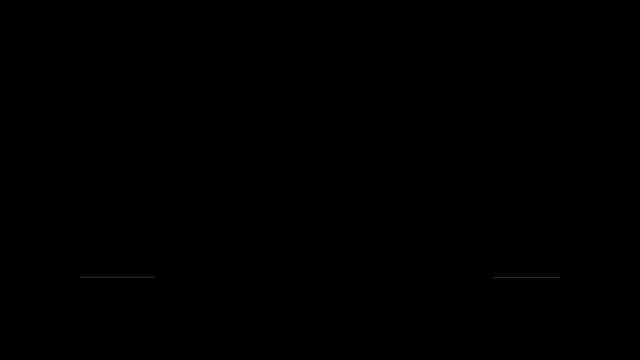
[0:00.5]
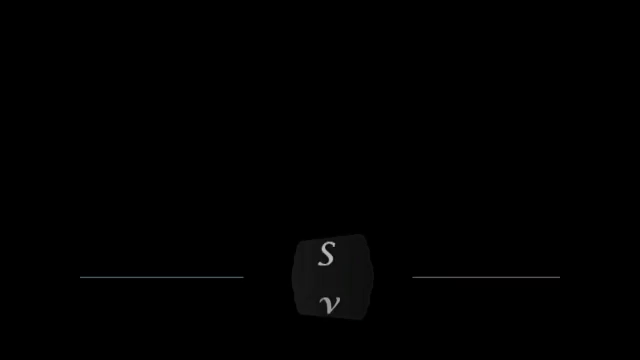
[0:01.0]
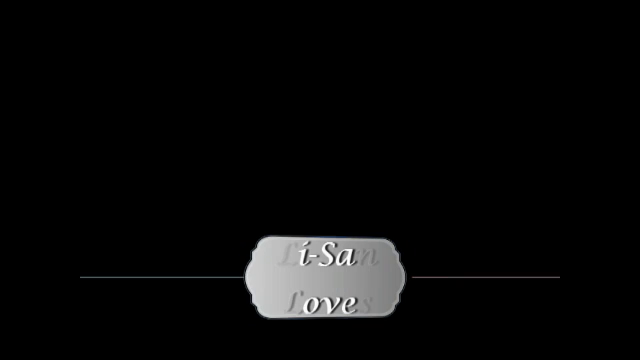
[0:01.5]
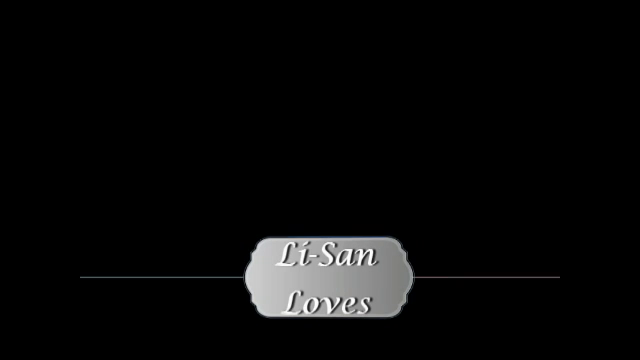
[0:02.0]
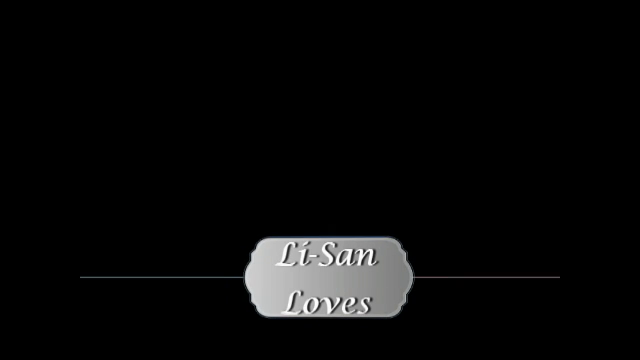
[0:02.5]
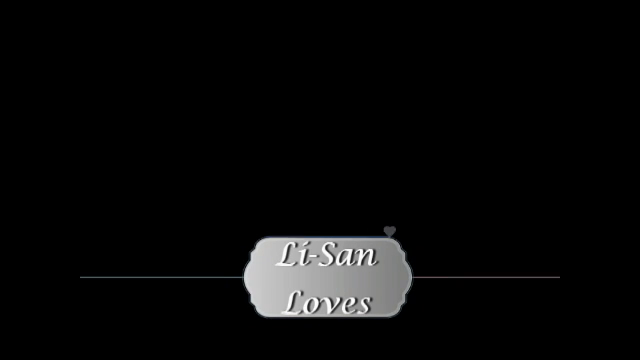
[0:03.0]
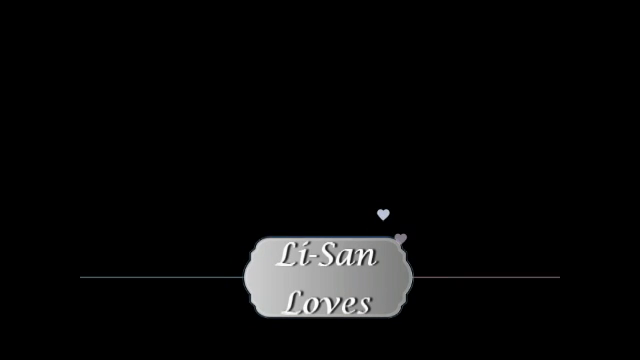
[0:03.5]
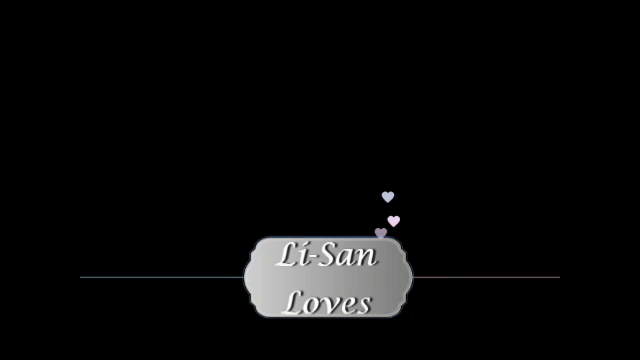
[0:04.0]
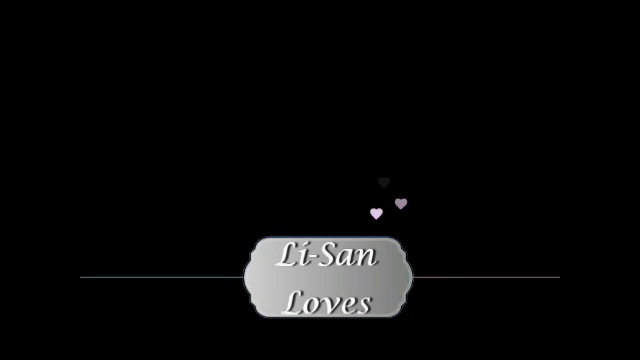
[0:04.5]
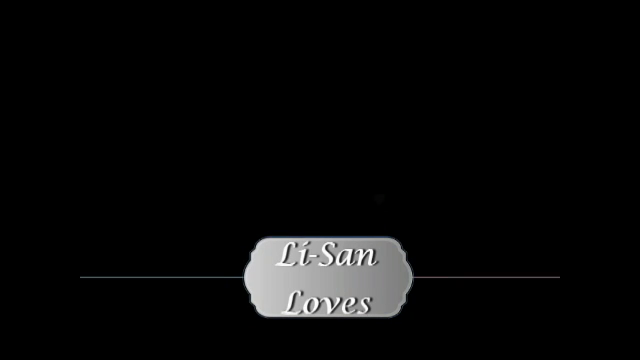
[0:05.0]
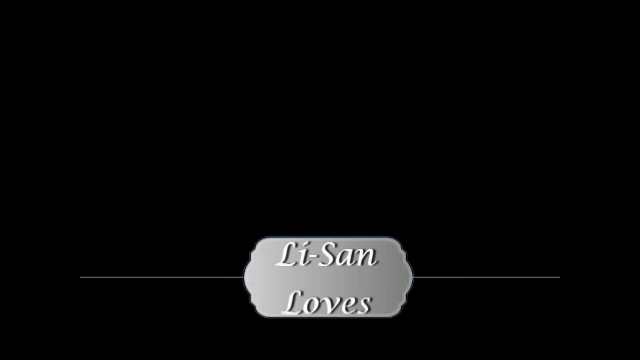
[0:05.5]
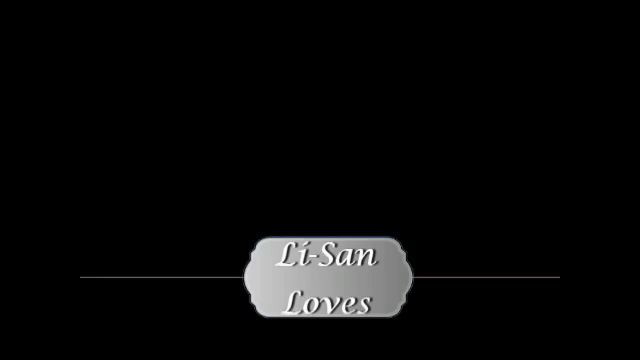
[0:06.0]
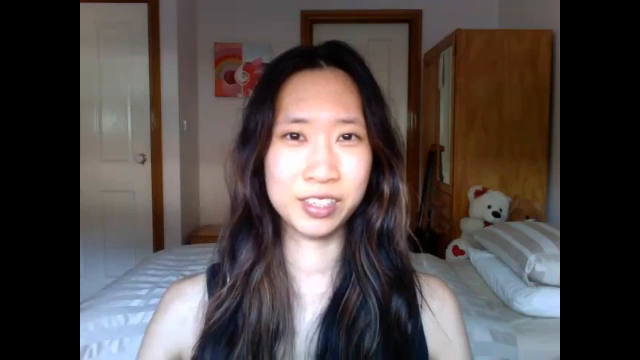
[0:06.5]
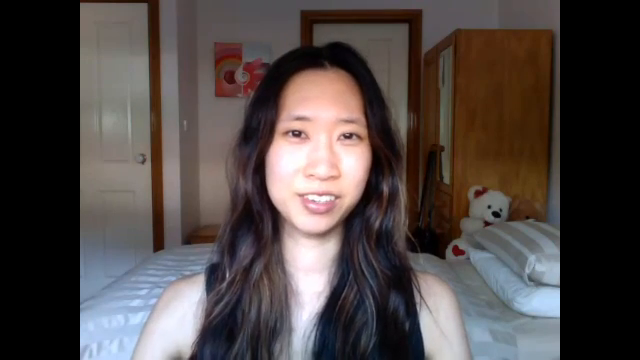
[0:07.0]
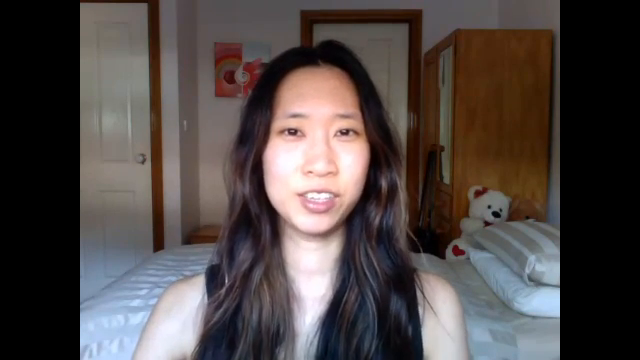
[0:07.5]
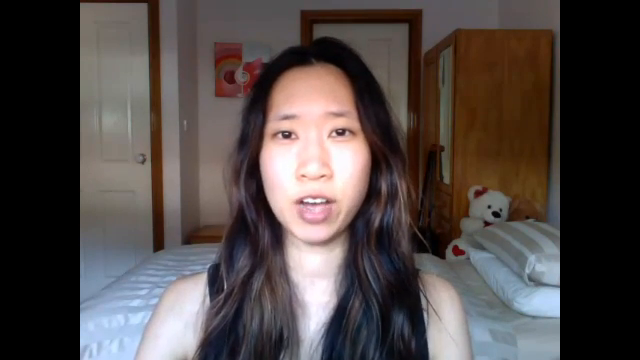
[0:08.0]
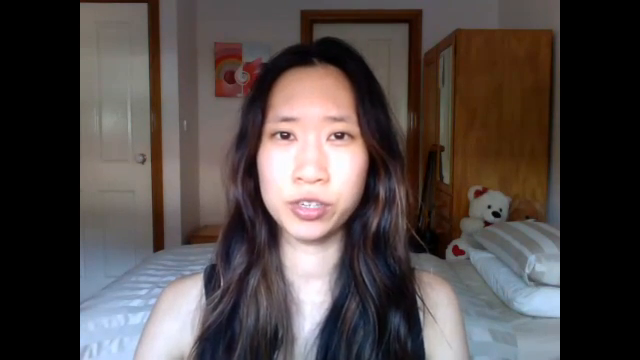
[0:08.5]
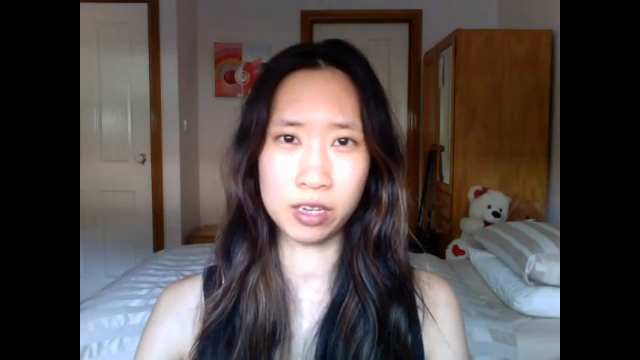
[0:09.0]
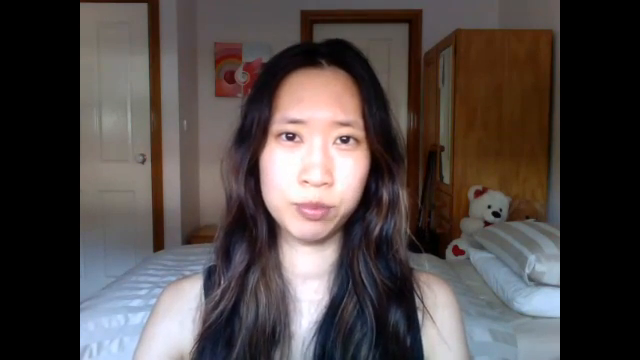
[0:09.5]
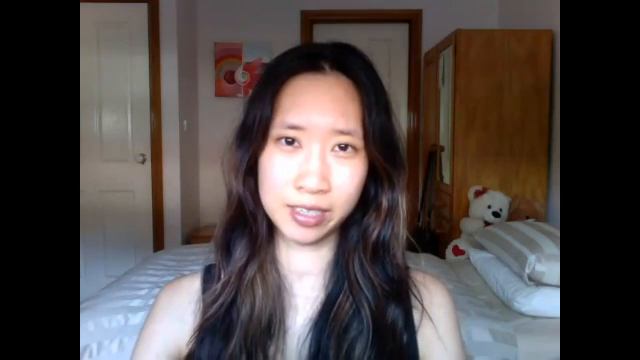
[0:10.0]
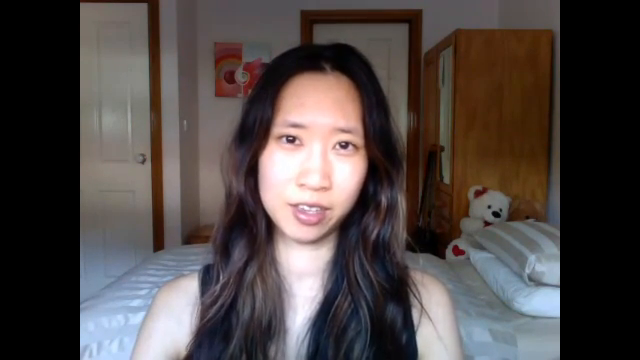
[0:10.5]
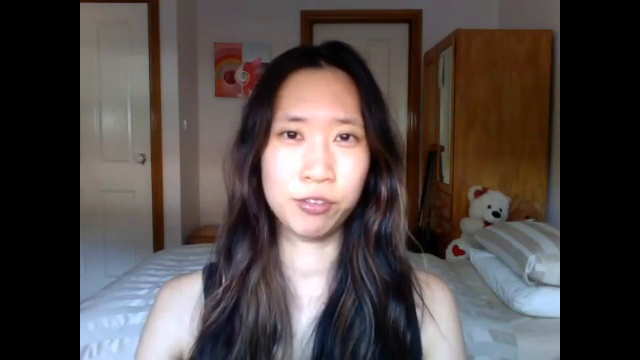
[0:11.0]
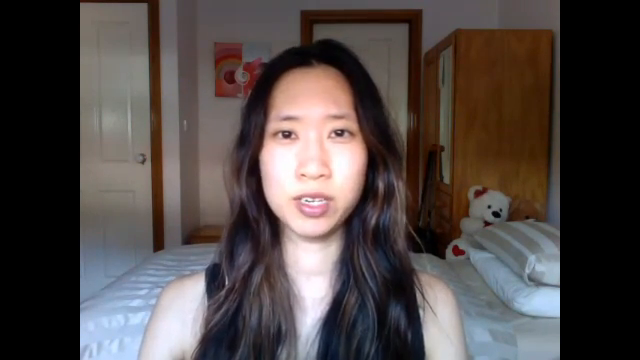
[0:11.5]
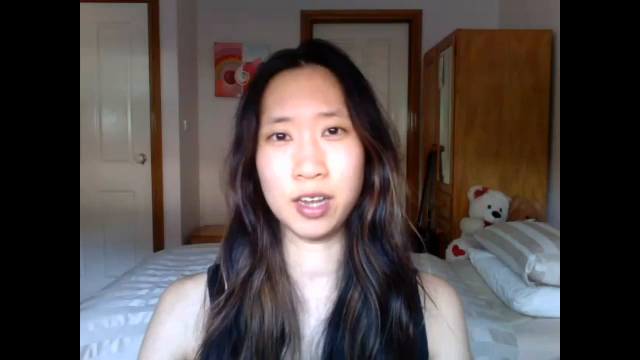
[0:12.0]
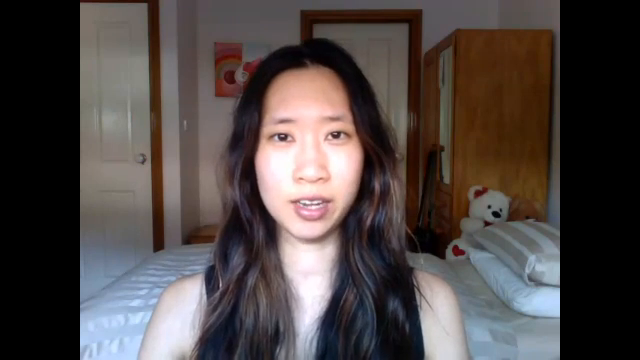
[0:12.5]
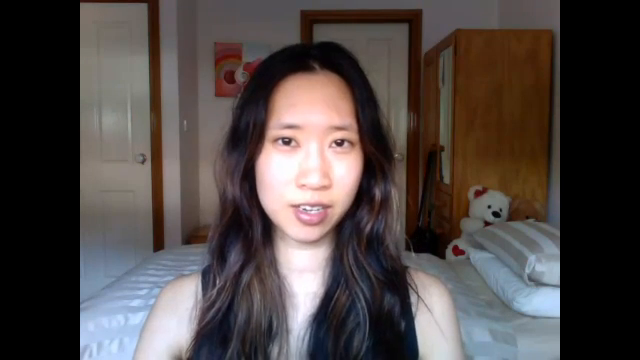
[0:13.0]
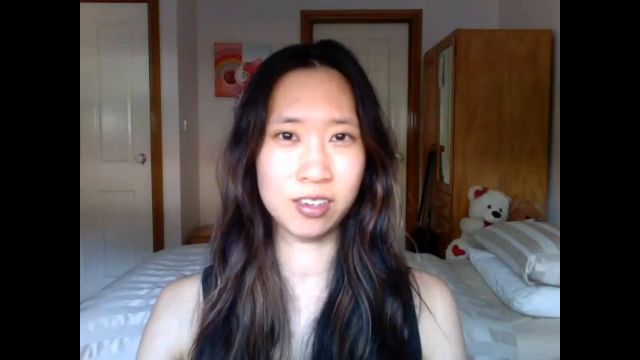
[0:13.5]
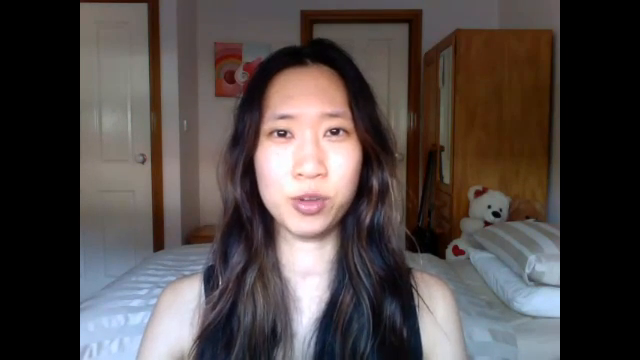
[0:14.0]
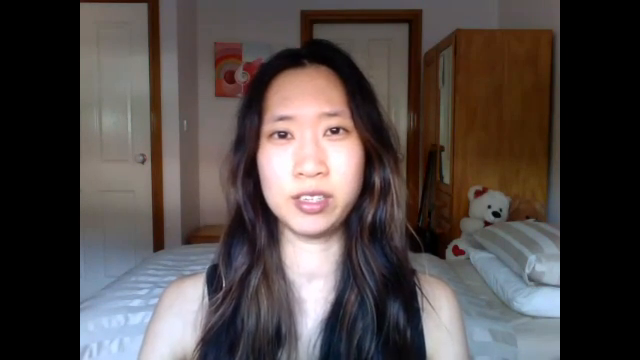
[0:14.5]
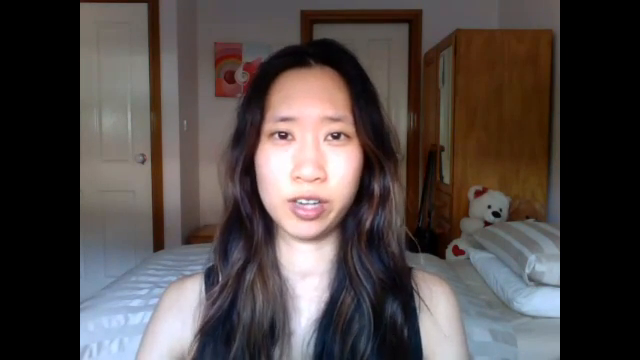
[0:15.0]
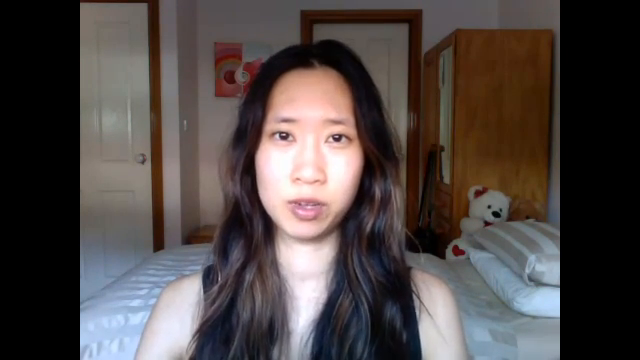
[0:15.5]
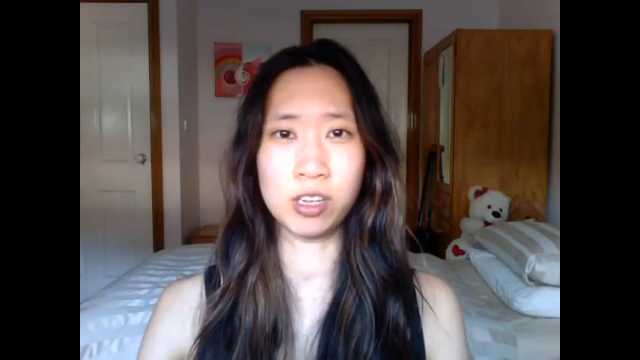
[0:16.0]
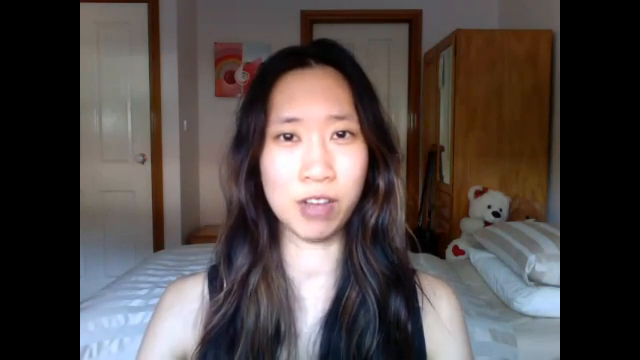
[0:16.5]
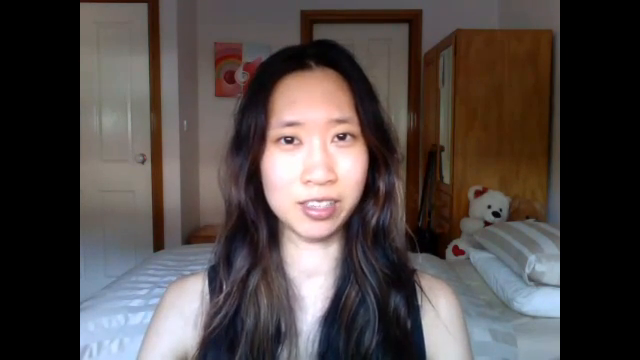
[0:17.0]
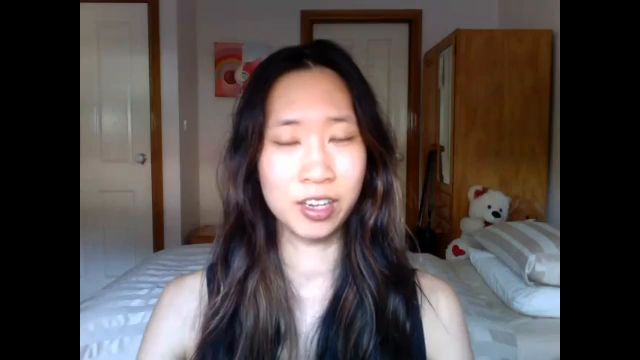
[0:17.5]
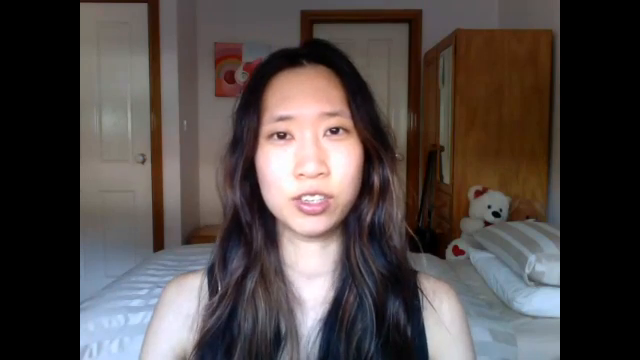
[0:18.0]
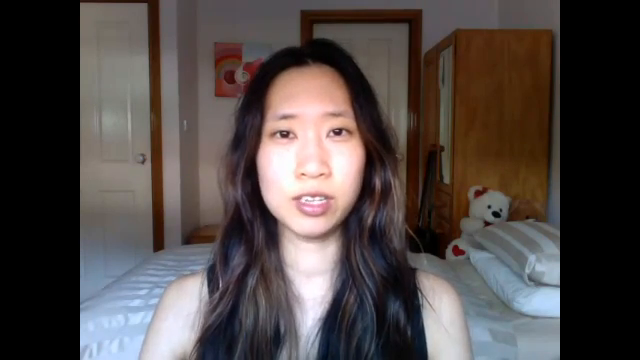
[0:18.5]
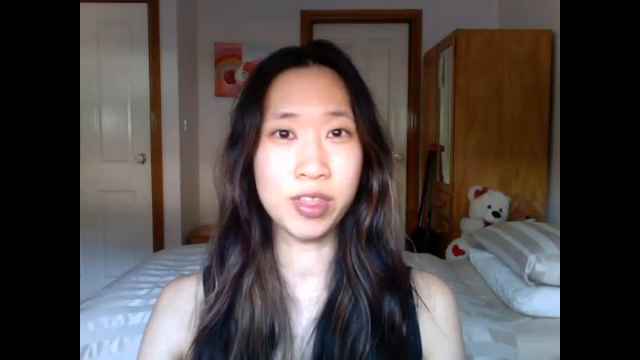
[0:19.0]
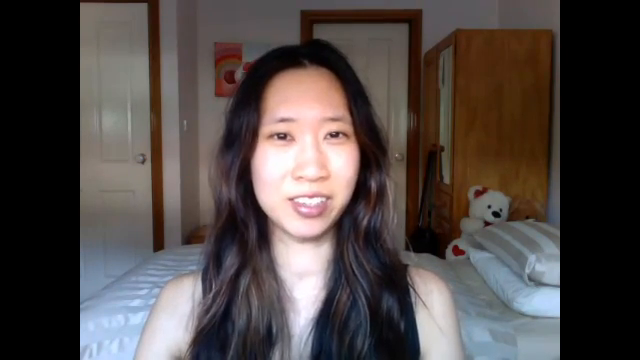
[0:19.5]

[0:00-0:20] A title card opens the video, with a sign that says "Lee Sun Loves" with little hearts; the woman appears to be a YouTube influencer. Behind her is a bed with two pillows, one with a gray and white striped pillowcase. There is also a white teddy bear that appears to have a red bow in its ear and red paw prints for its feet. The teddy bear is leaned against what looks to be an armoire, something to hold clothes in. Behind the armoire is a door that could possibly lead to a hallway or a bathroom, and another door is slightly more to the left of the frame. A picture on the wall between the two doors shows the colors red, yellow, pink and blue. The woman is Asian, with long dark hair with some blonde highlights.